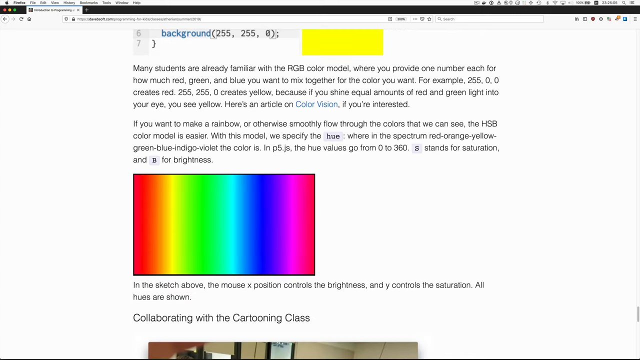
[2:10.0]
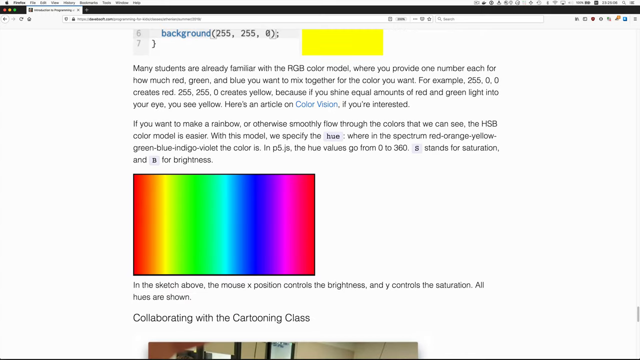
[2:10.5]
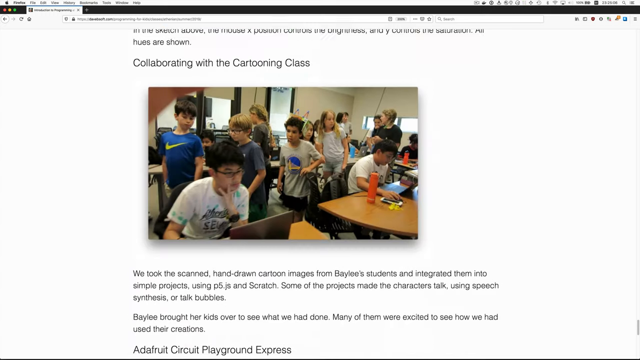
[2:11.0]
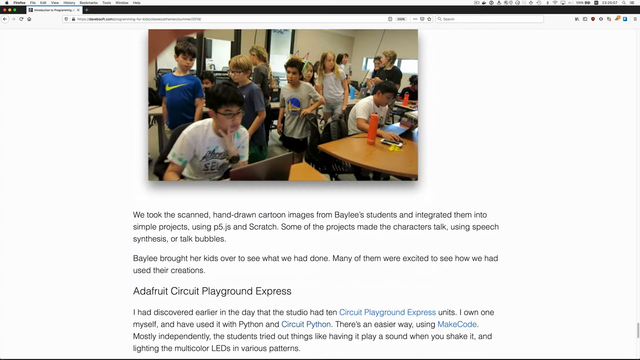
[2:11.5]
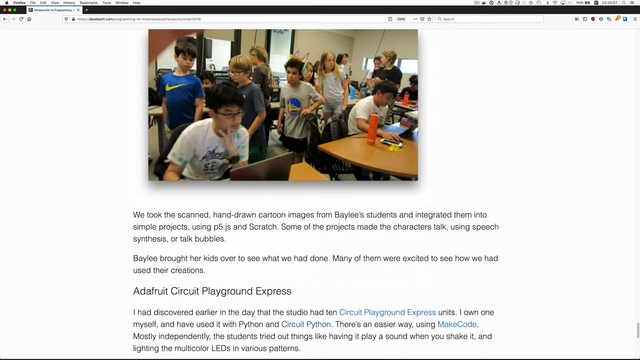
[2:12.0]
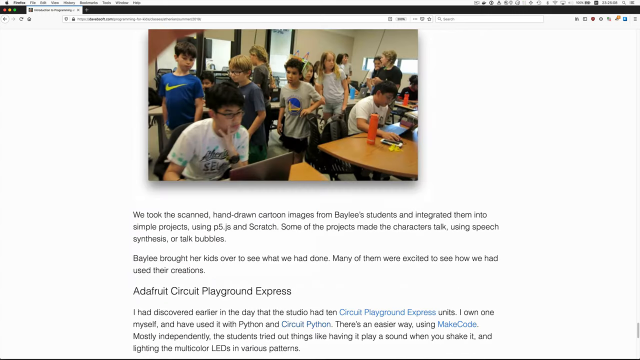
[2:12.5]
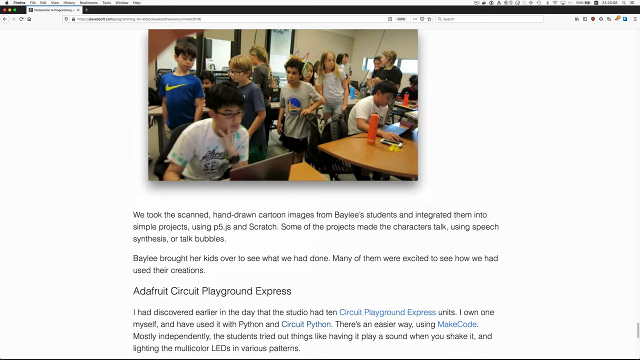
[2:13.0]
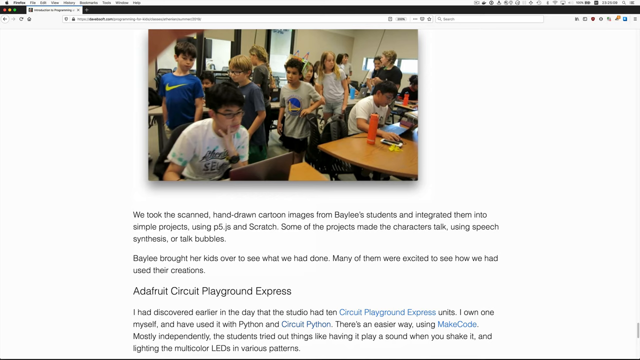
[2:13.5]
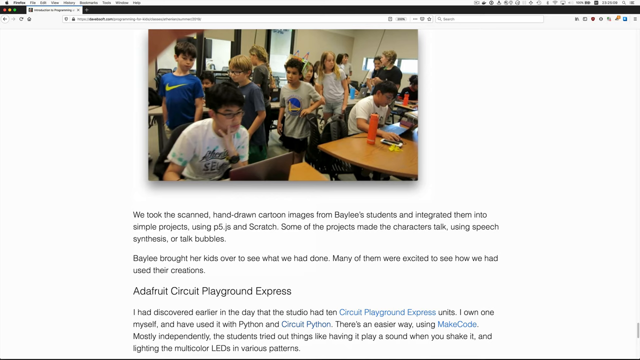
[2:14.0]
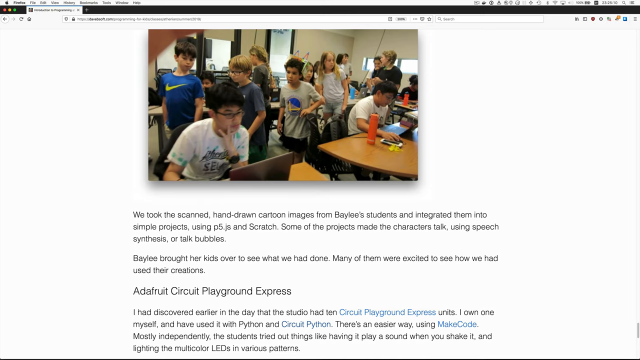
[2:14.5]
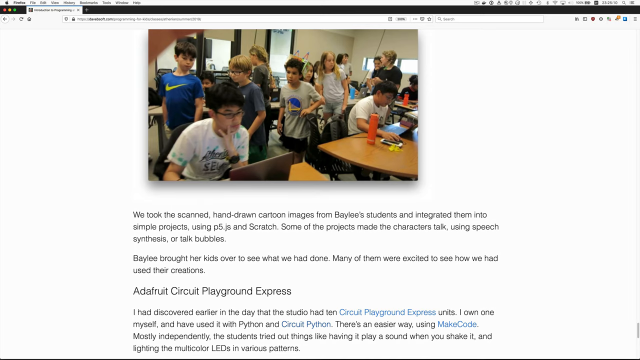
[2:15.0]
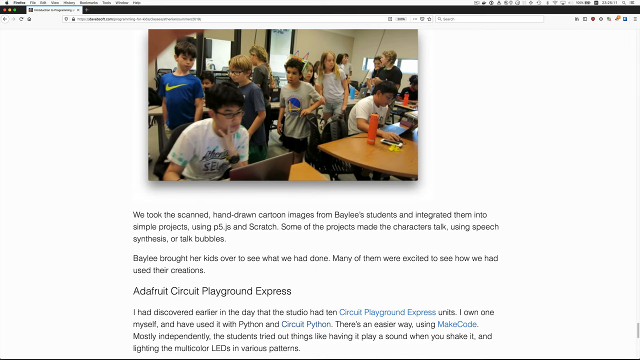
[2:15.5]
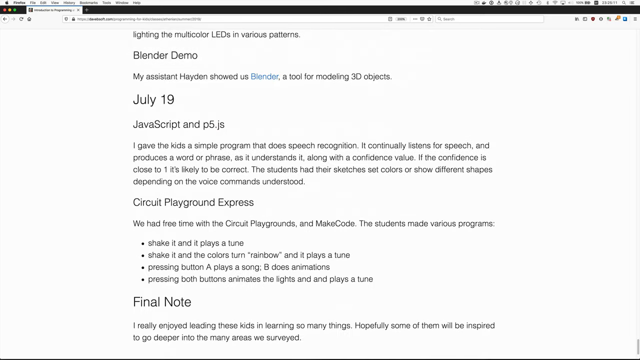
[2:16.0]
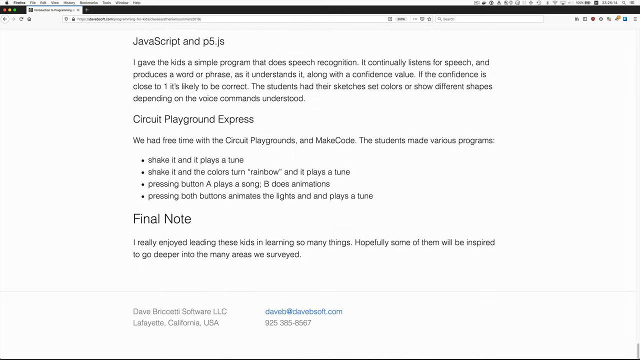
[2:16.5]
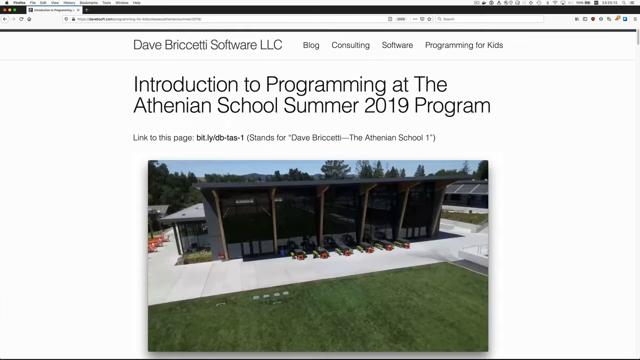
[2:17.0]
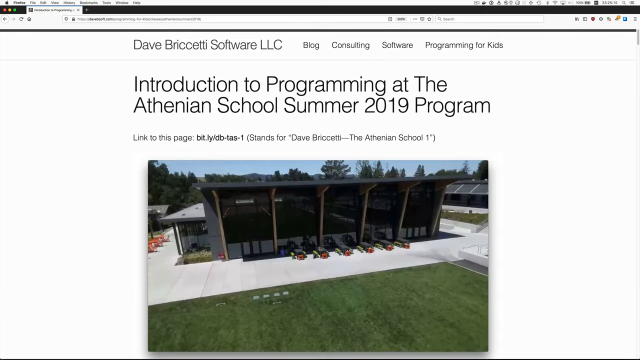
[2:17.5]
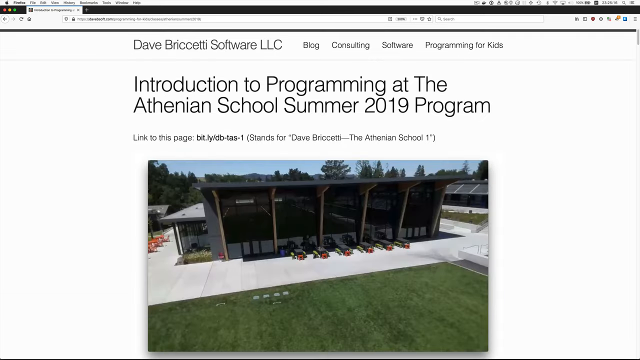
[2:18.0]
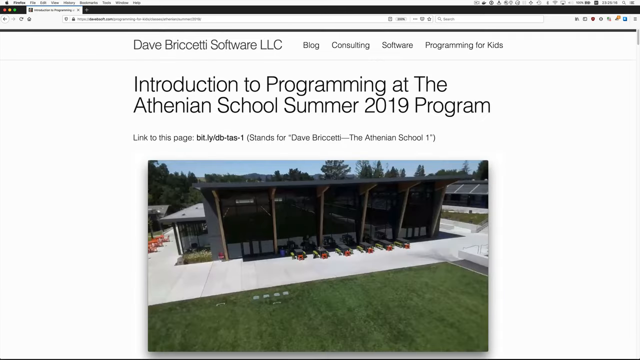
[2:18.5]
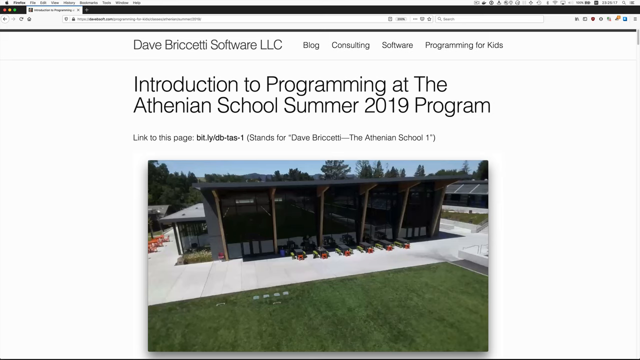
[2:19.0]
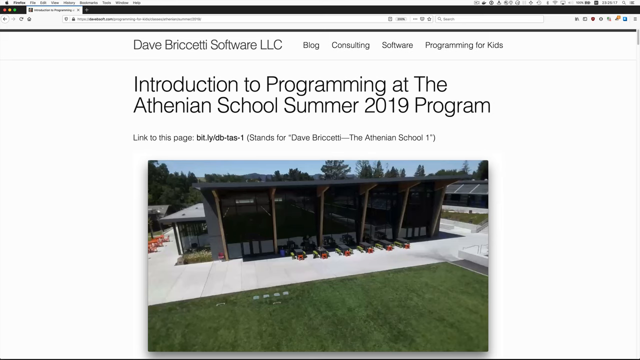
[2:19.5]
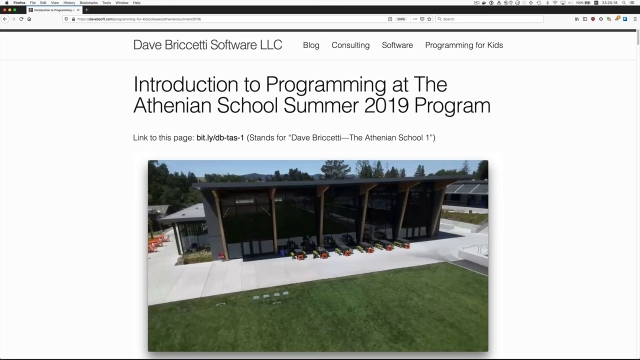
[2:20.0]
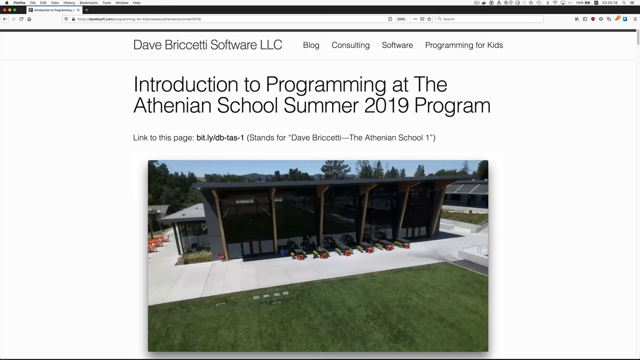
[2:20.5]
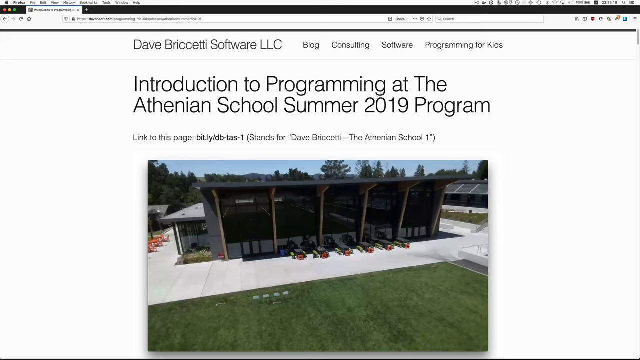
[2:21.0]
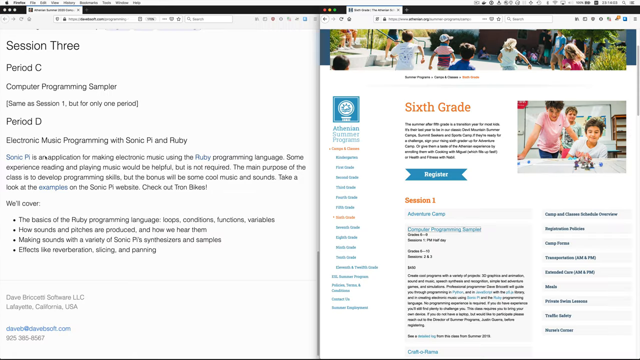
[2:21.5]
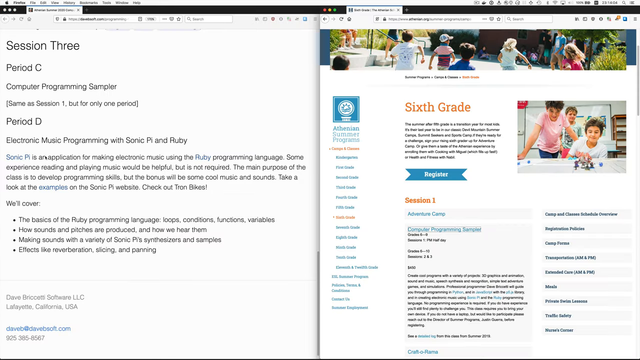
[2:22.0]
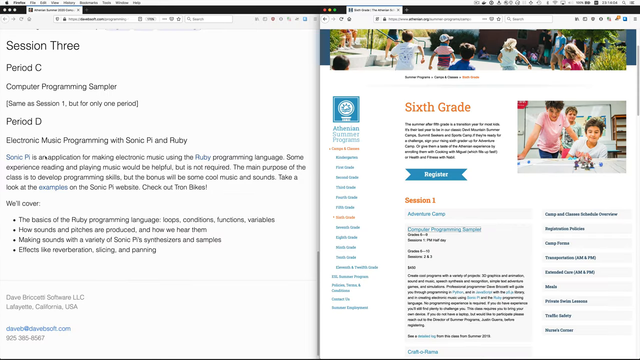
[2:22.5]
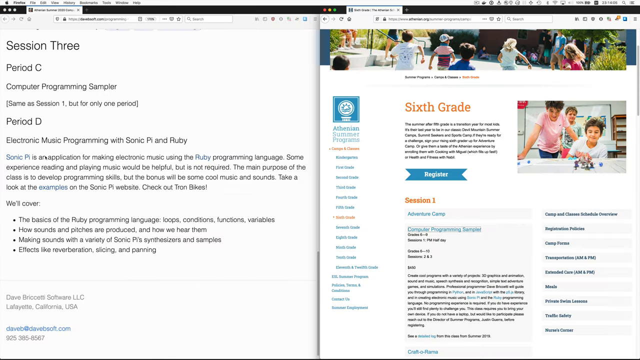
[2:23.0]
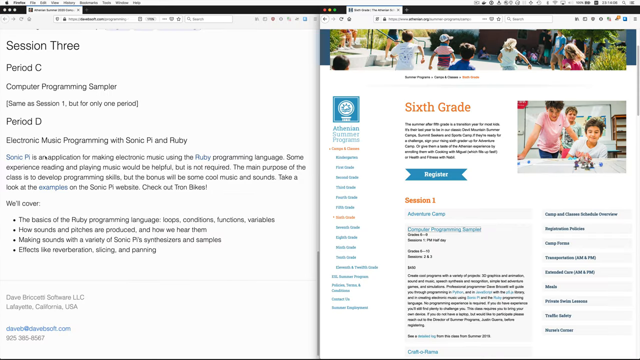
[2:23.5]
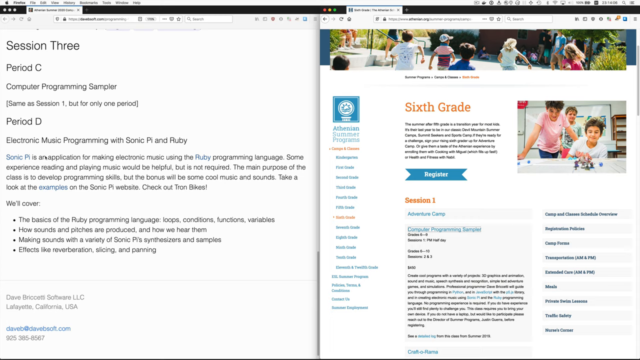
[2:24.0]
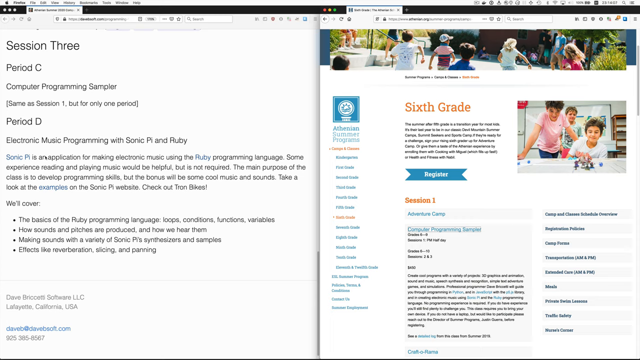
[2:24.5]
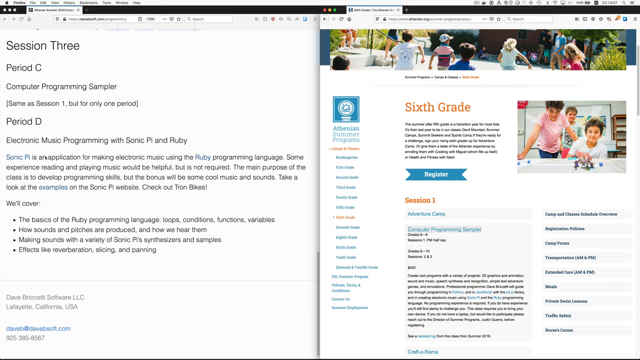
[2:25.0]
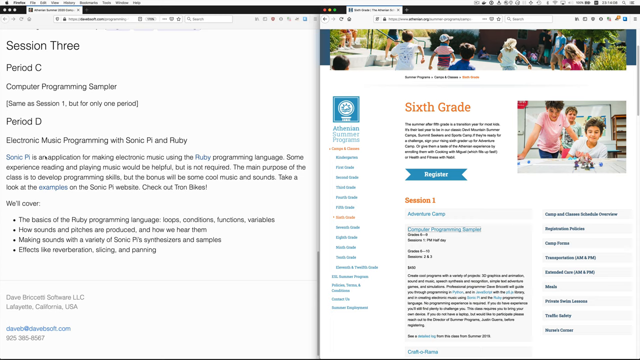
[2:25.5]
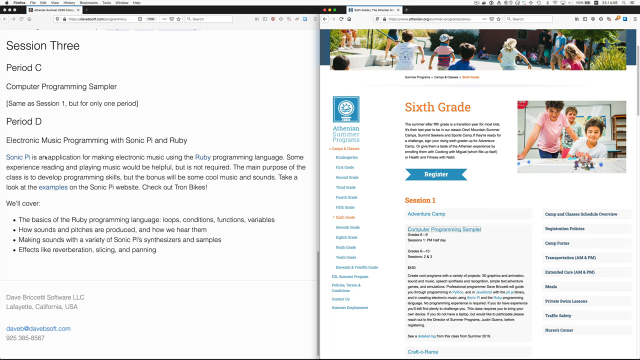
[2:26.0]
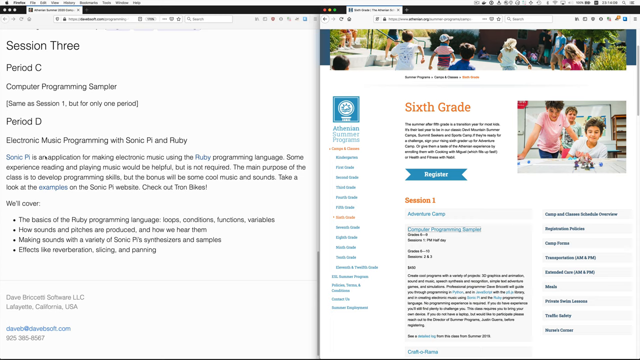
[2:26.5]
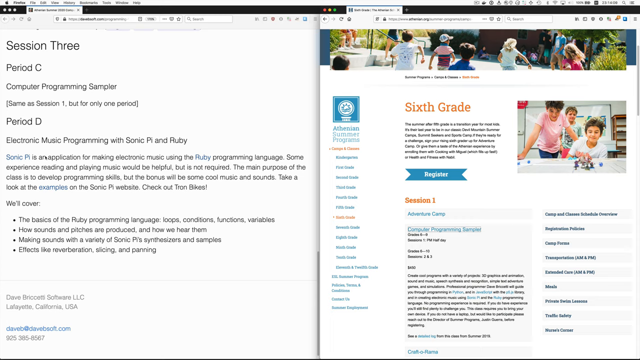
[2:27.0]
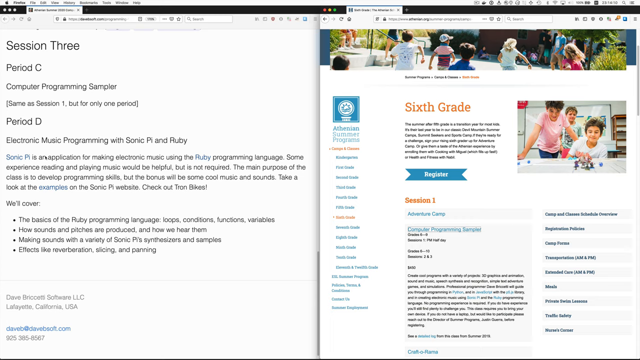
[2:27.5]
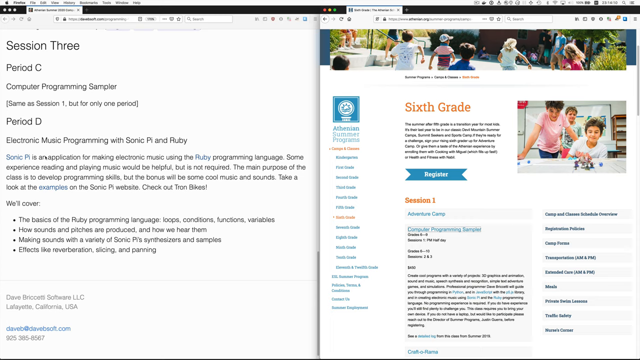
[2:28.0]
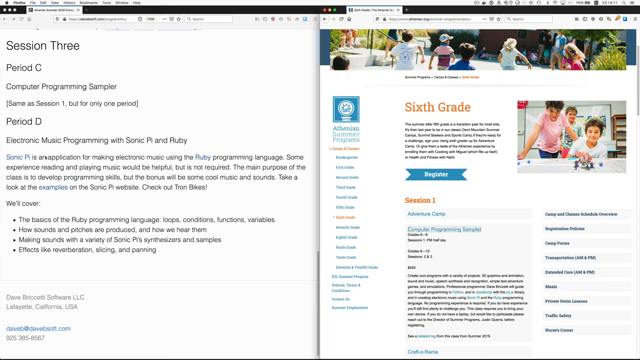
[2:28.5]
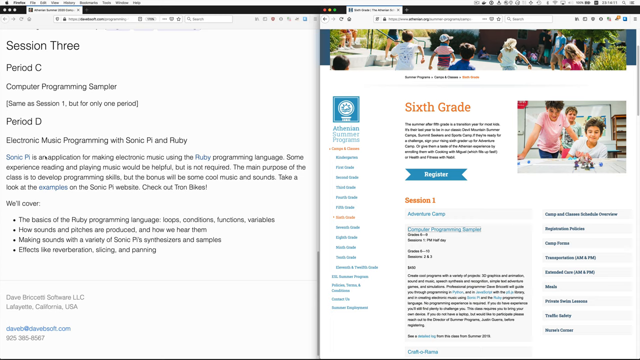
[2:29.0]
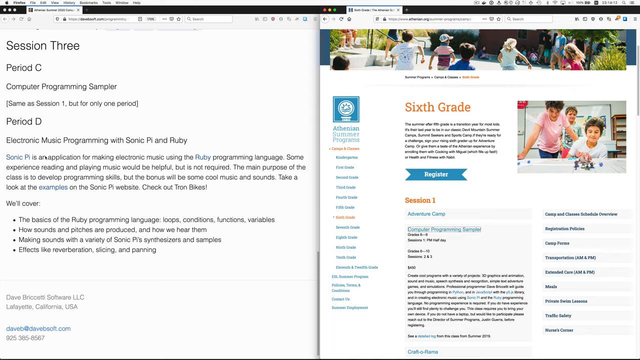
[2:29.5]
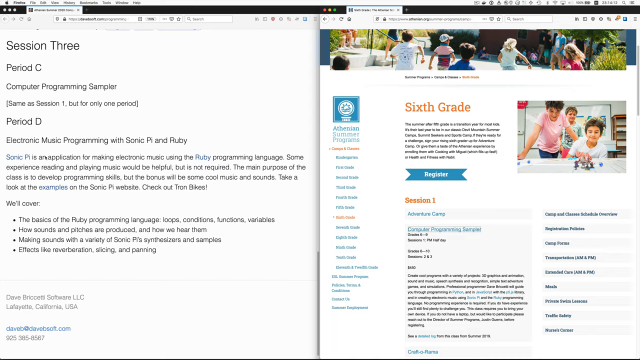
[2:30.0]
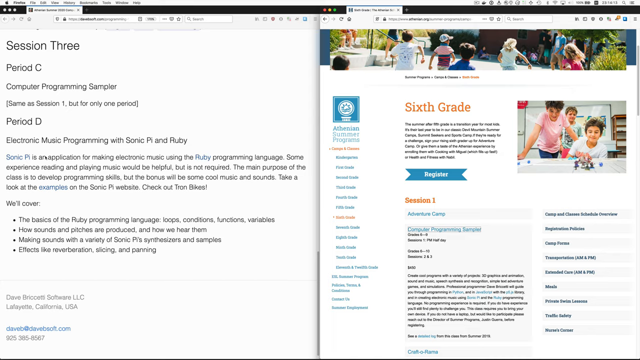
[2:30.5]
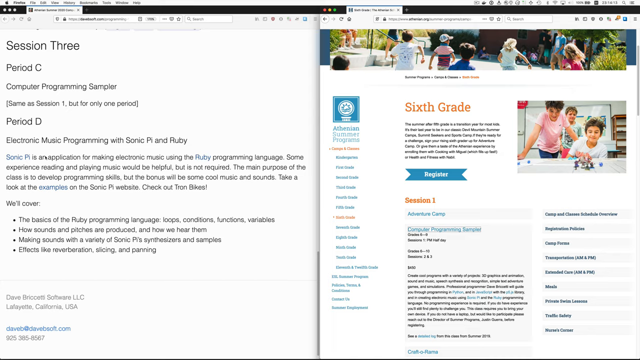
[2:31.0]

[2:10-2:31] A page of writing is shown. It reads: "Many students are already familiar with the RGB color model, where you provide one number each for how much red, green, blue you want to mix together for the color you want." It continues with an example about creating yellow, "Here's an article on color vision if you're interested," and text about making a rainbow or smoothly flowing through the colors with the HSV color model, where the hue specifies where in the spectrum (red, orange, yellow, blue, green, indigo, violet) the color is, followed by "In P5.js, the hue values go from 0 to 360" and mentions of saturation and brightness. Underneath is a rectangular box with very colorful lines going from red, orange, yellow, green, light blue, dark blue, pink, and red, with the text "In the sketch above, the mouse X position controls the brightness, and Y controls the saturation. All hues are shown." The next page shows an image of many children in a classroom and more information. The video then switches to an introductory page.